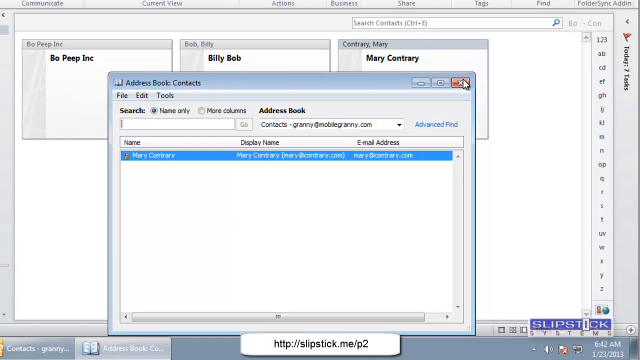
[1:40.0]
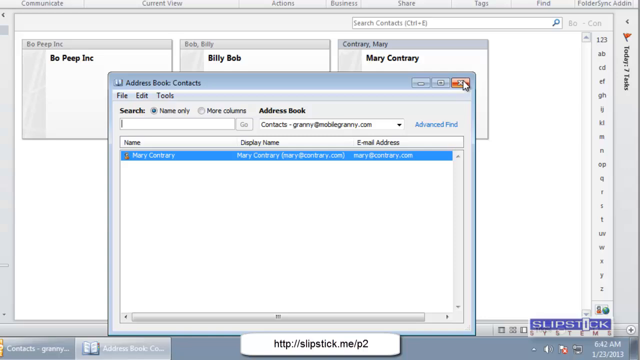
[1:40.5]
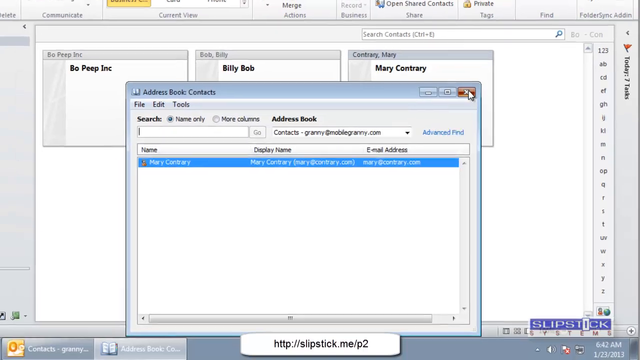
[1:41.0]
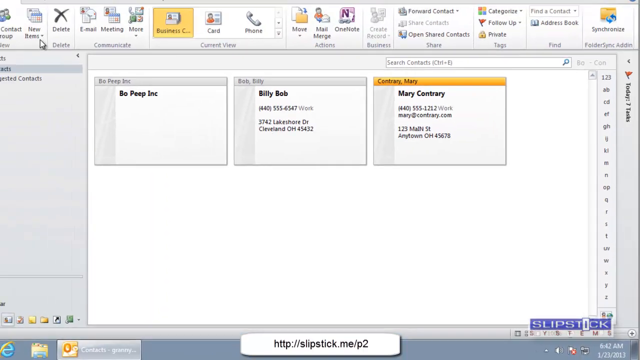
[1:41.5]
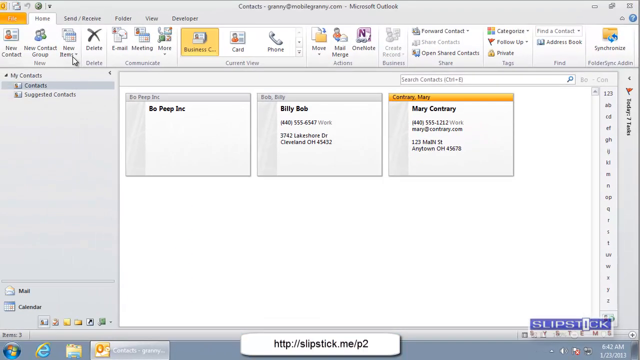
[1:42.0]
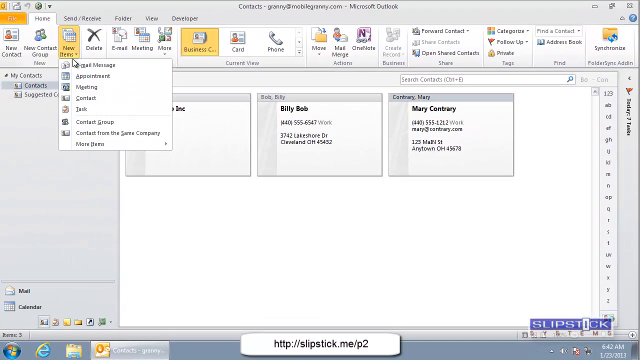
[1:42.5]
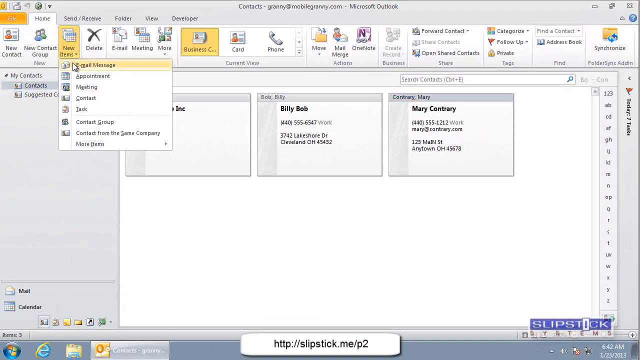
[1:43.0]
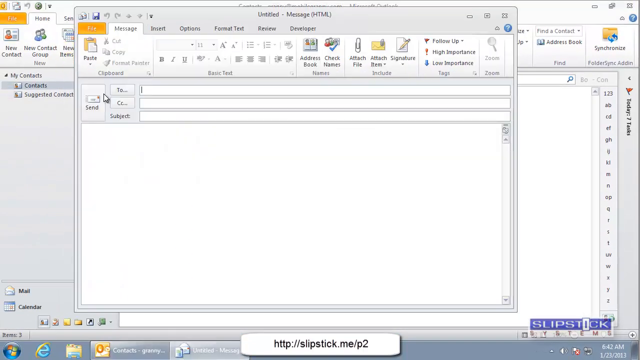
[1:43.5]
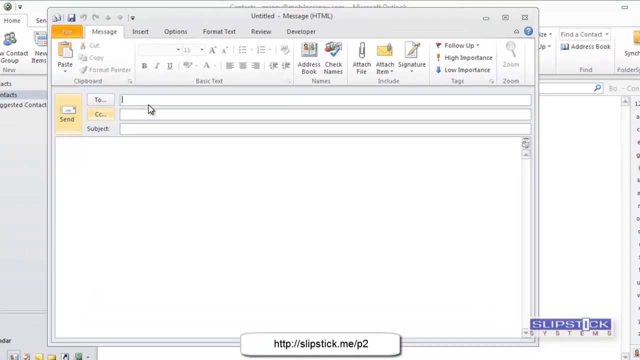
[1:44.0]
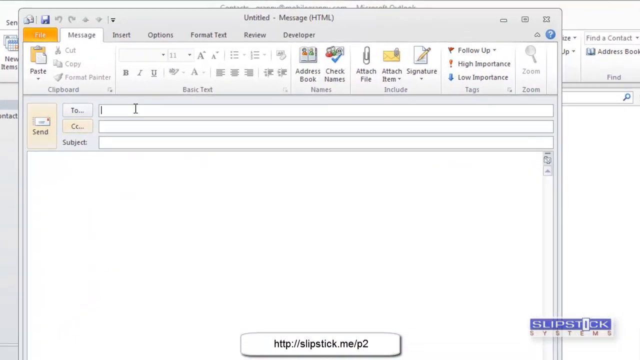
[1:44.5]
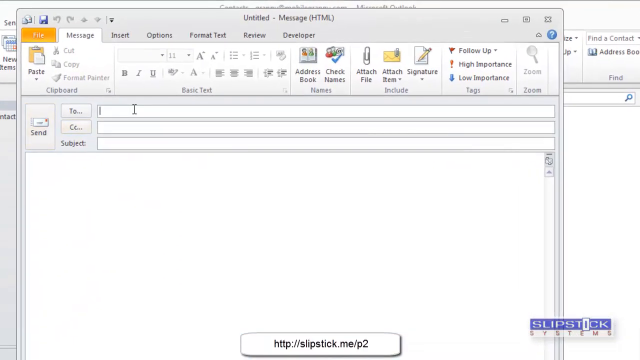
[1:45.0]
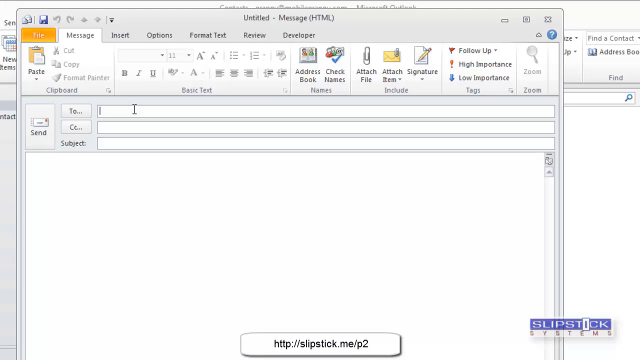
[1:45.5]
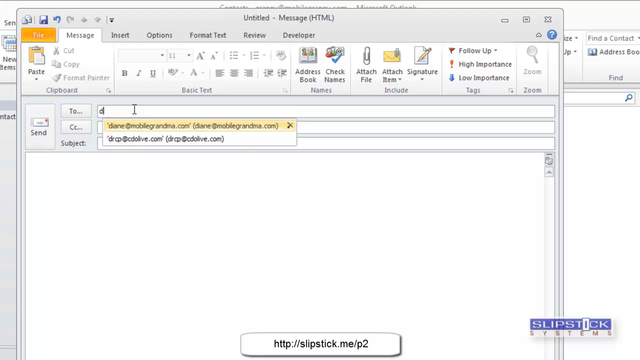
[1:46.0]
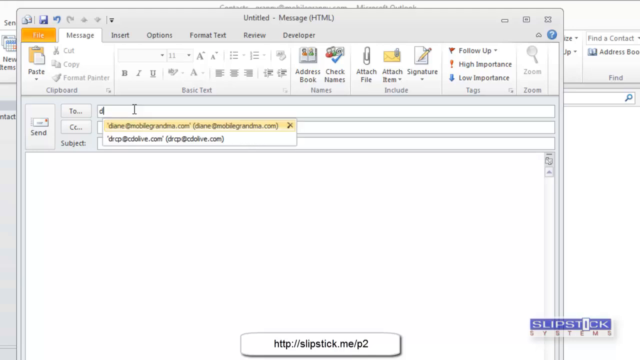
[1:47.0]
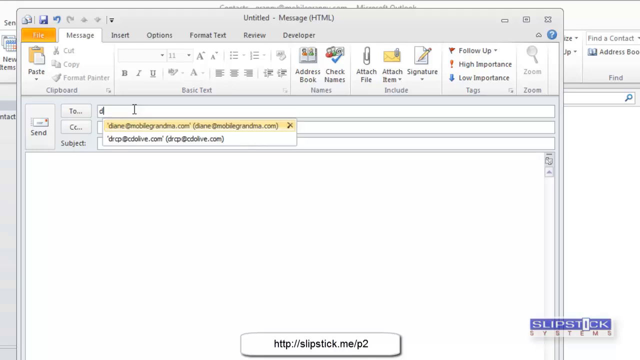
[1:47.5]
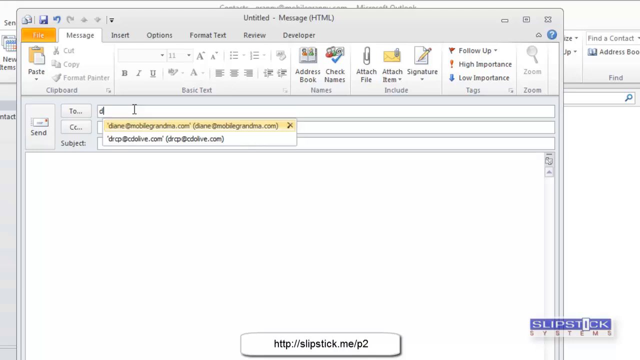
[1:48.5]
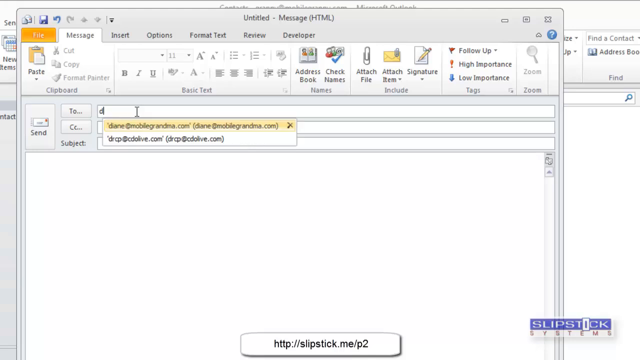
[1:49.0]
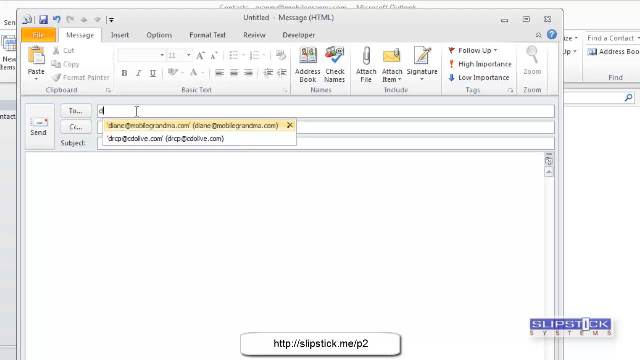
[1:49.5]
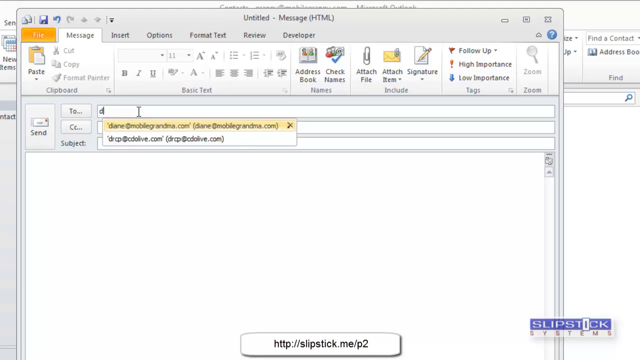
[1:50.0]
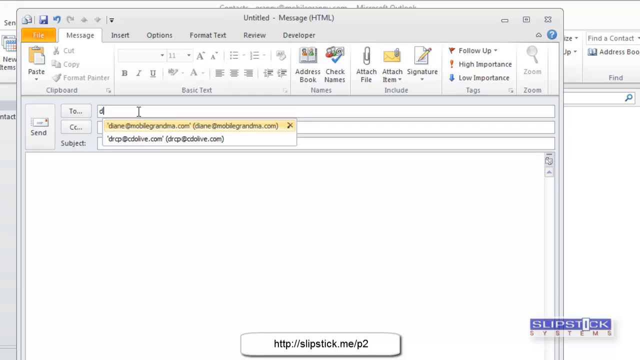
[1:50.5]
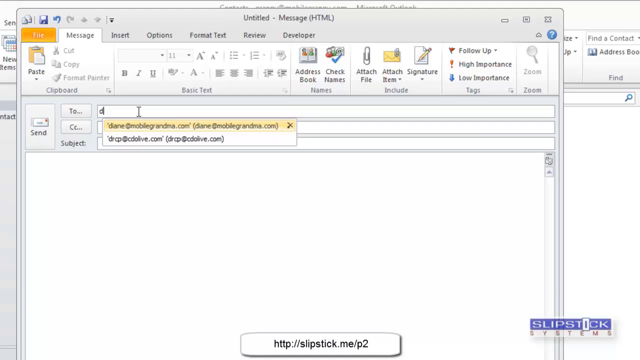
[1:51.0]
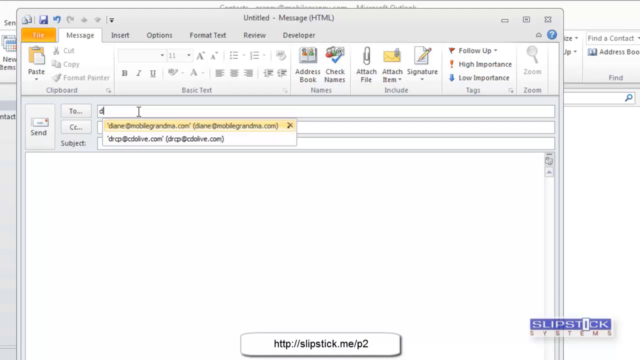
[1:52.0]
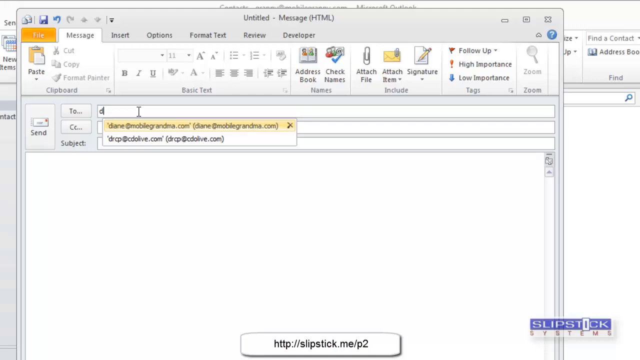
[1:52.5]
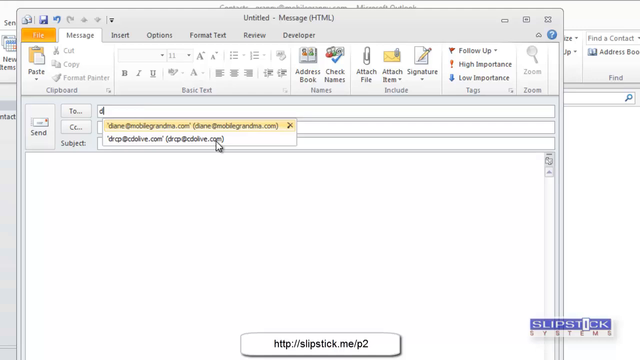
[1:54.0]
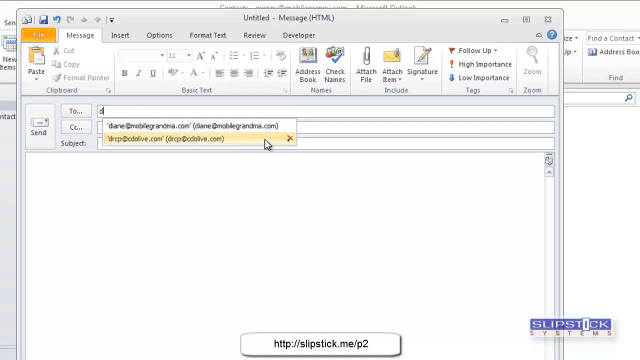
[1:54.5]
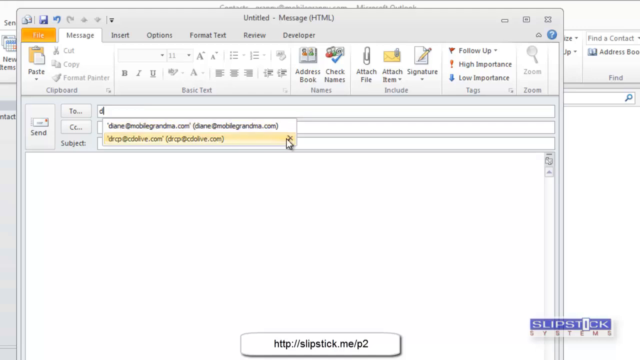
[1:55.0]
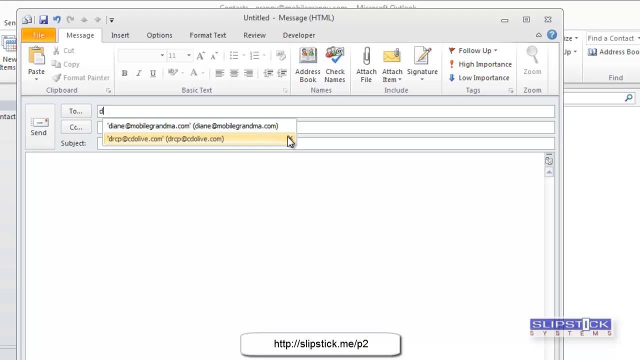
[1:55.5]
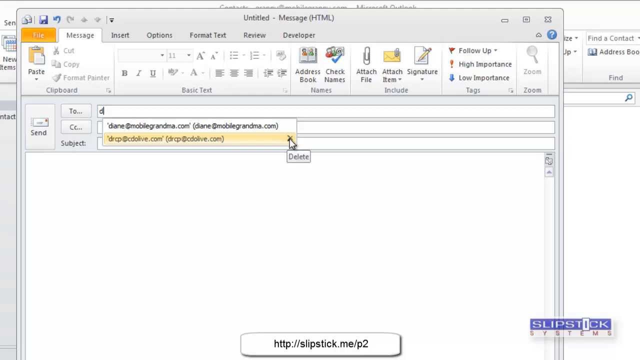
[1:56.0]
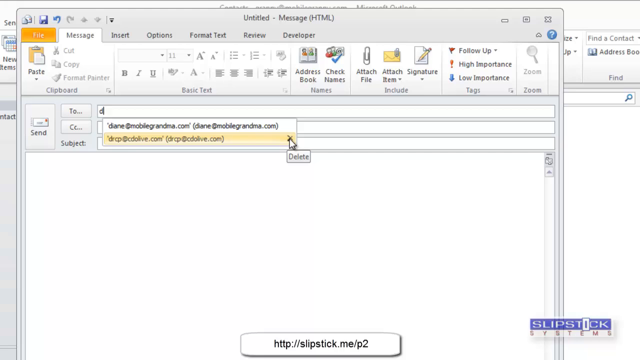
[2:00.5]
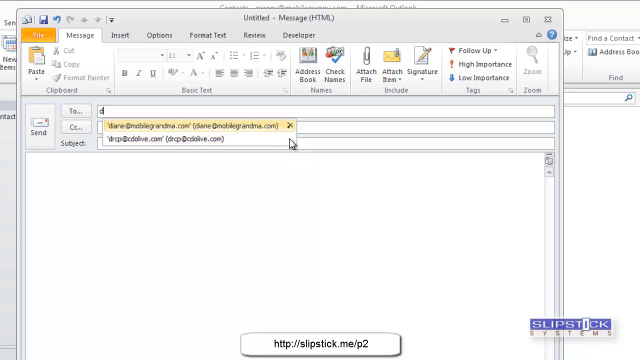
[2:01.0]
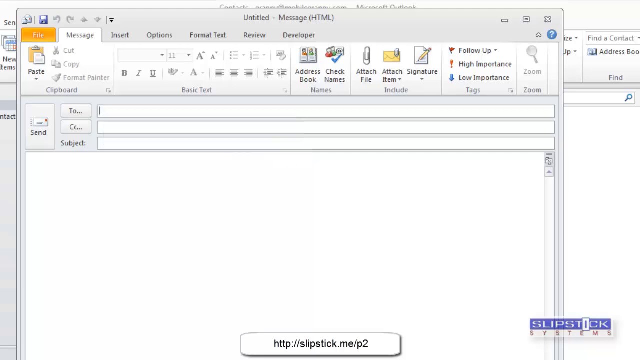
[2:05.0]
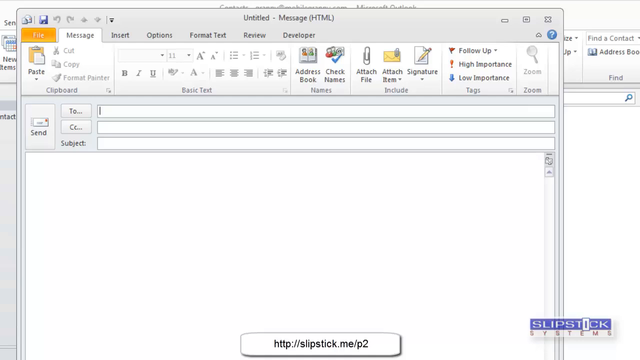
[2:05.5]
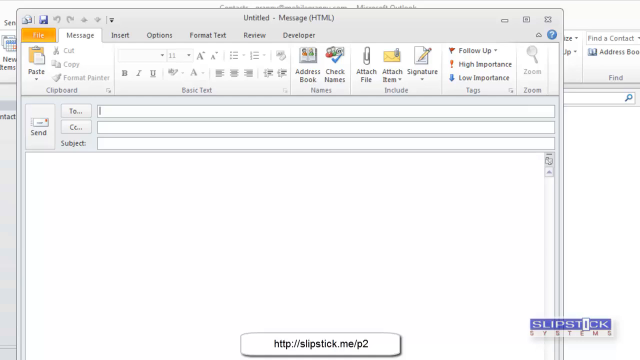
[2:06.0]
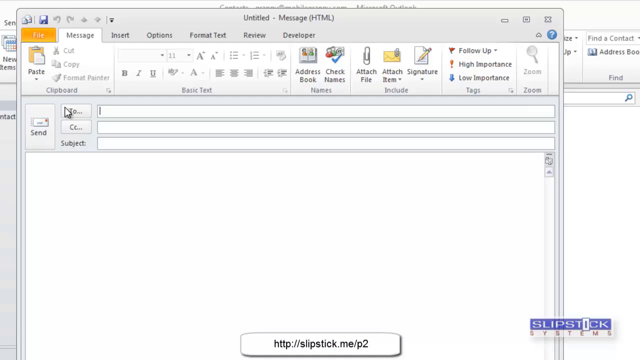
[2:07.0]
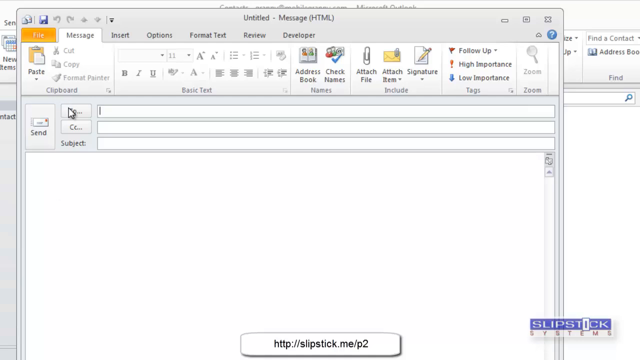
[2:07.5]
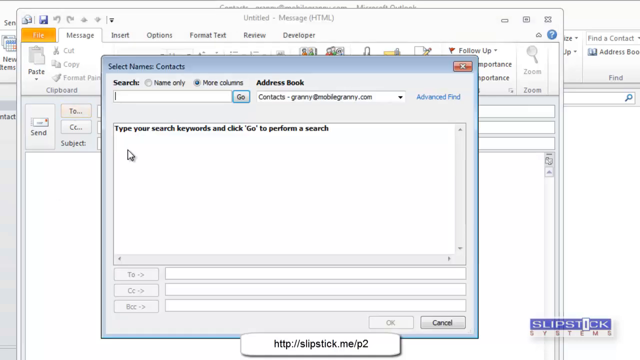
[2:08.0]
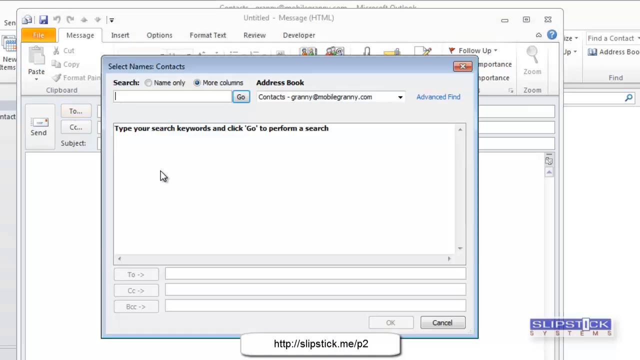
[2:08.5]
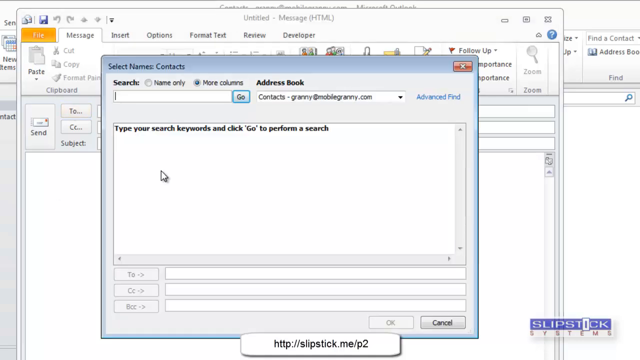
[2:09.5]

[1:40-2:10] The user continues going through the address book and looking at different options. A message at the top says "Untitled Message," apparently a new email. They go to the To section and slowly select an email address from the address book, and hover over the delete section under the addresses, possibly about to delete one. They go back to To, the address book pops up again with a zoom out, and they go back into the message section. They keep bouncing back and forth between the message section and the address book without really selecting anything, possibly figuring out the program or demonstrating how the messaging app works.